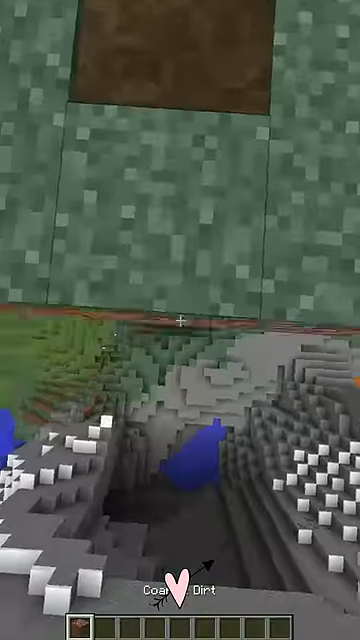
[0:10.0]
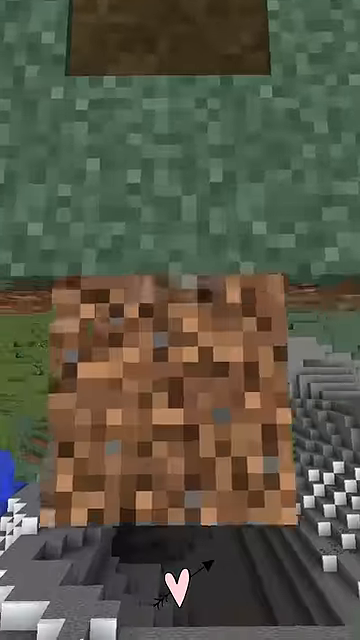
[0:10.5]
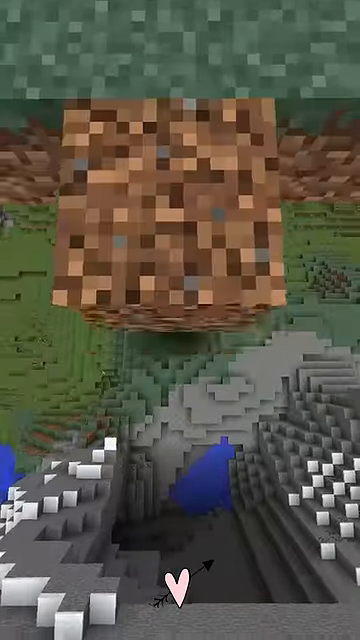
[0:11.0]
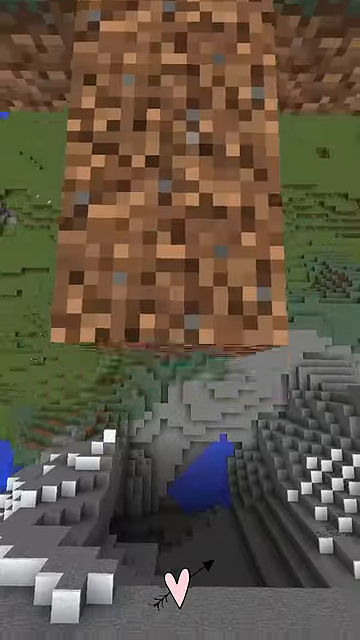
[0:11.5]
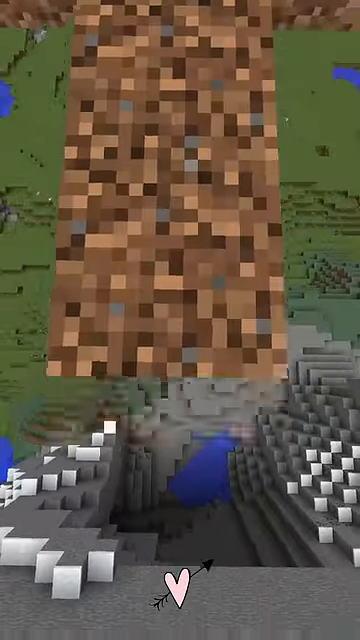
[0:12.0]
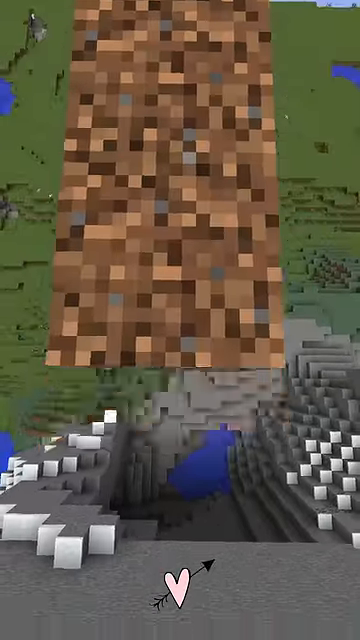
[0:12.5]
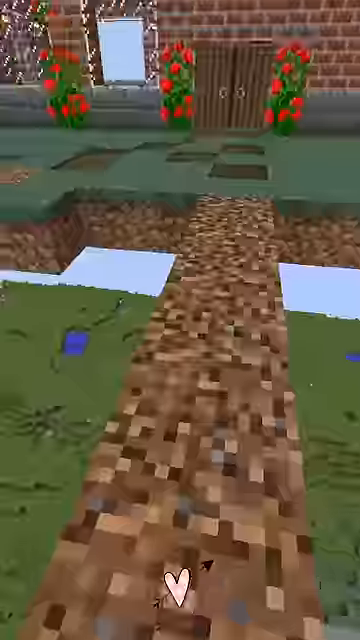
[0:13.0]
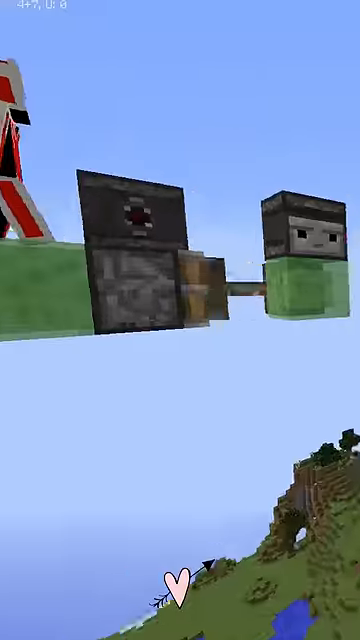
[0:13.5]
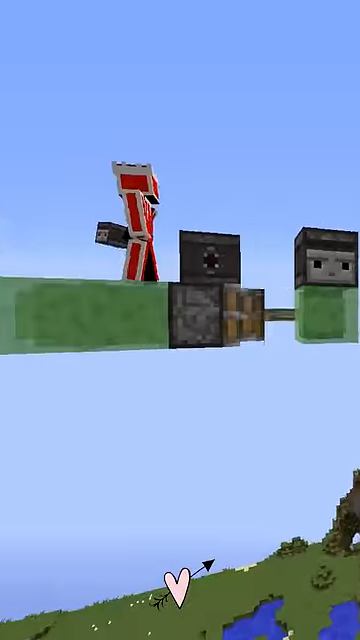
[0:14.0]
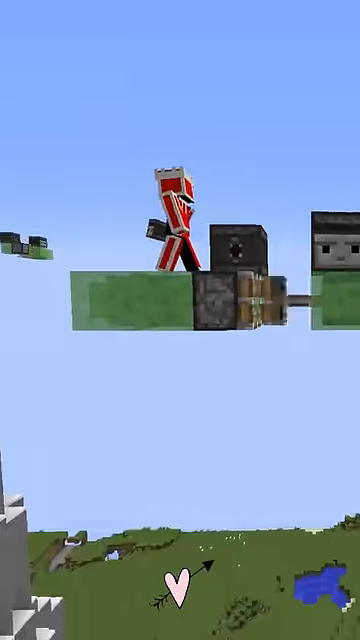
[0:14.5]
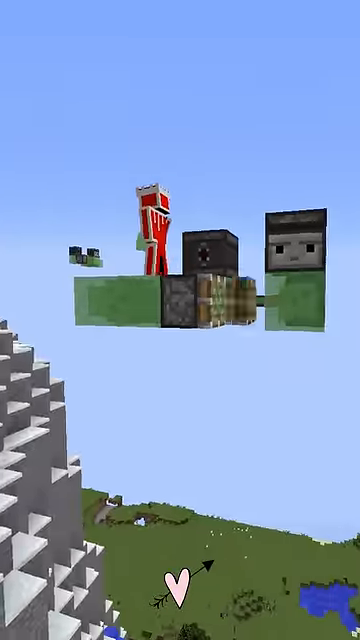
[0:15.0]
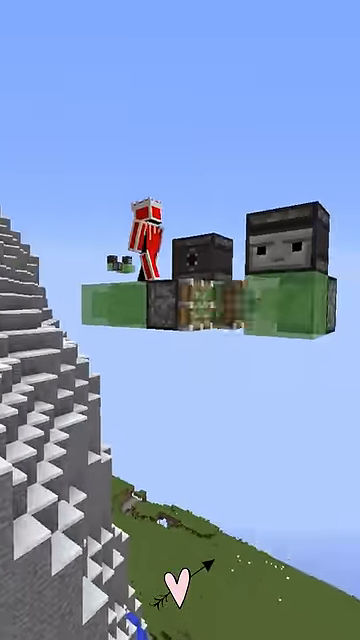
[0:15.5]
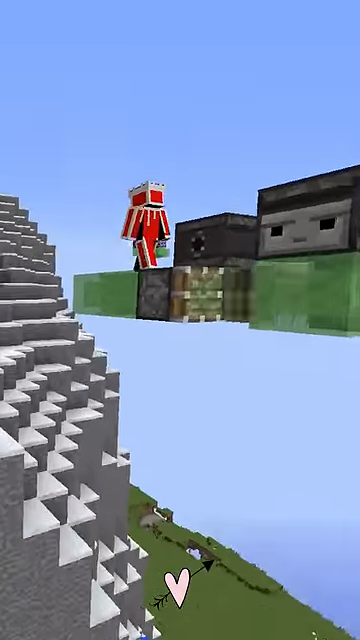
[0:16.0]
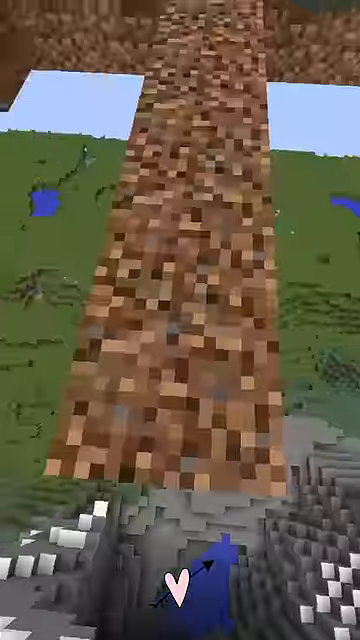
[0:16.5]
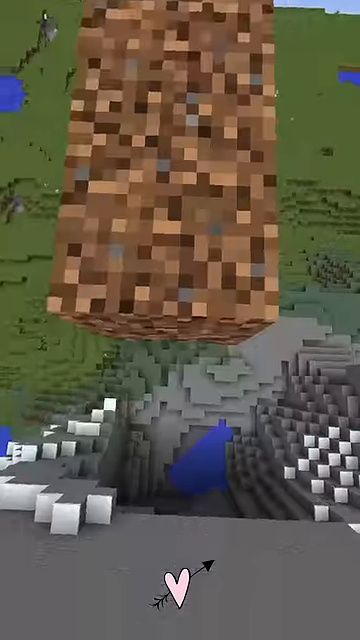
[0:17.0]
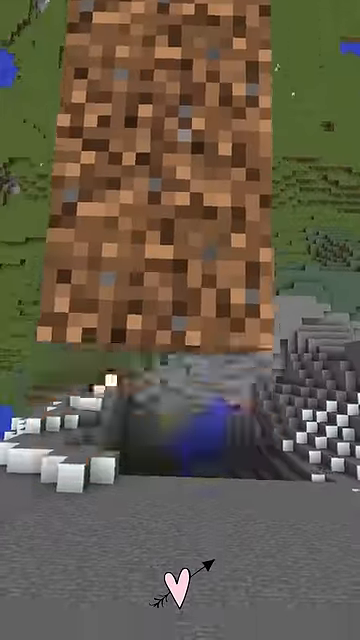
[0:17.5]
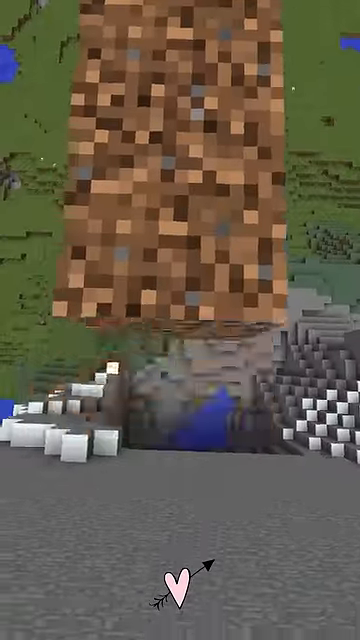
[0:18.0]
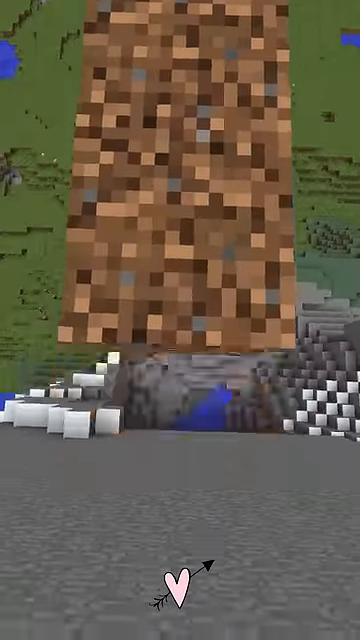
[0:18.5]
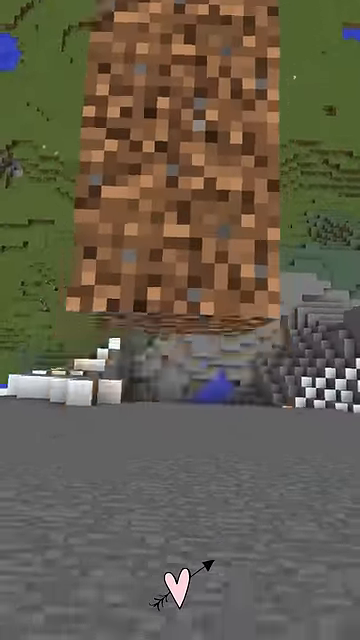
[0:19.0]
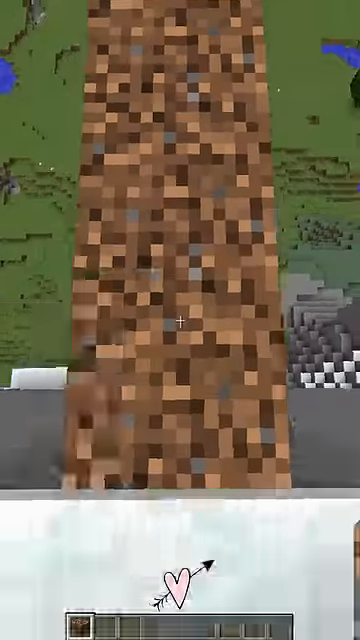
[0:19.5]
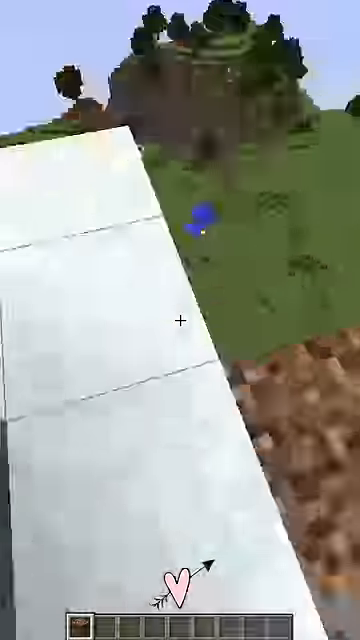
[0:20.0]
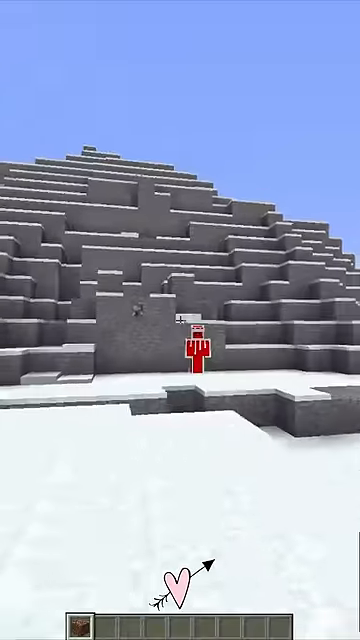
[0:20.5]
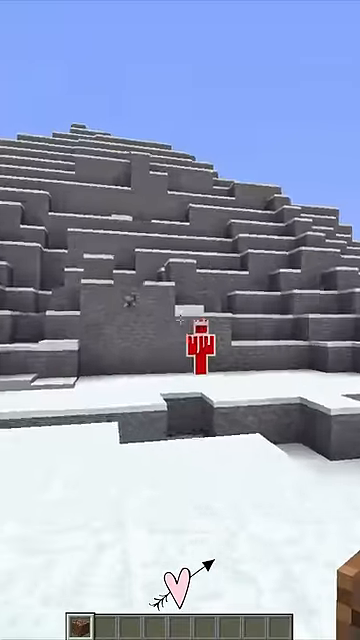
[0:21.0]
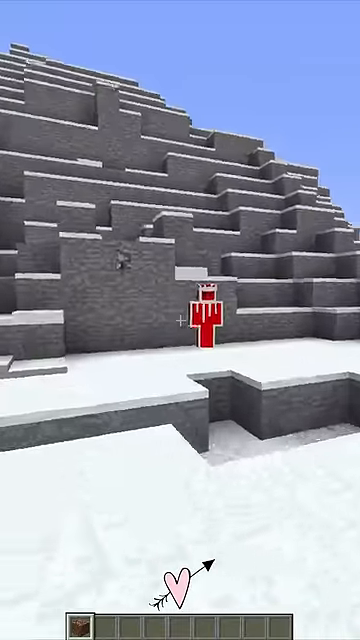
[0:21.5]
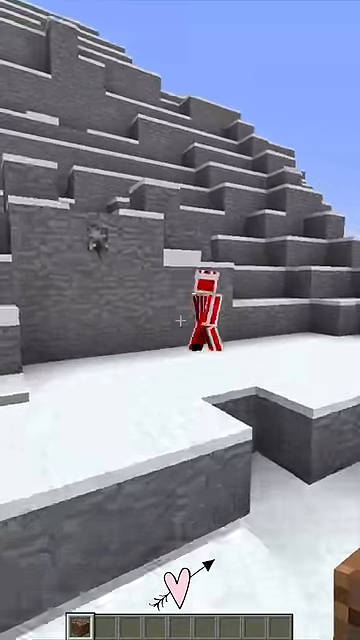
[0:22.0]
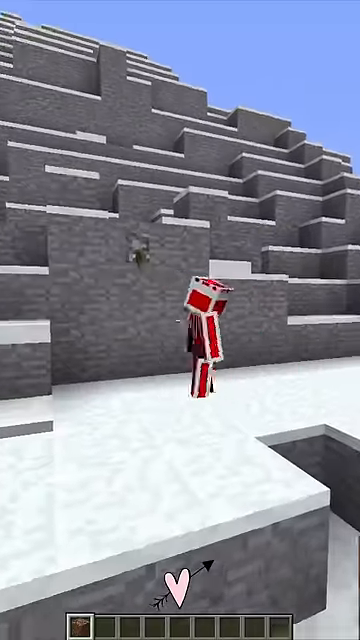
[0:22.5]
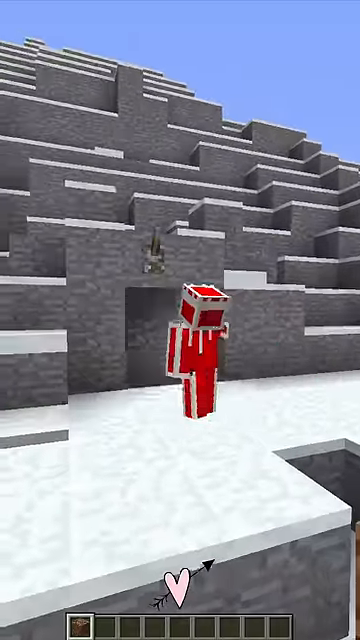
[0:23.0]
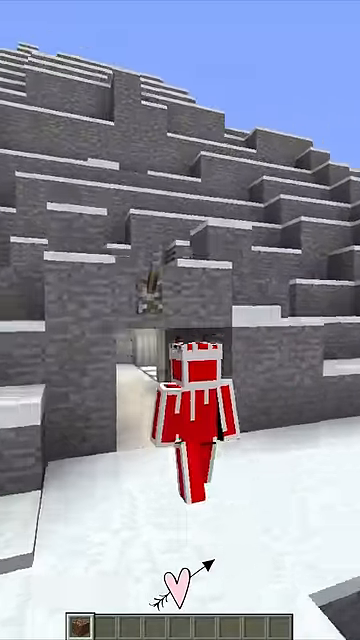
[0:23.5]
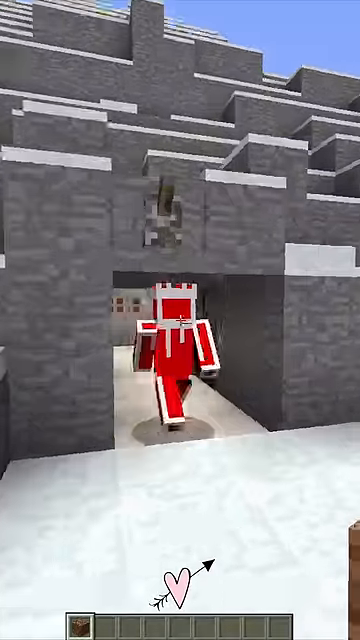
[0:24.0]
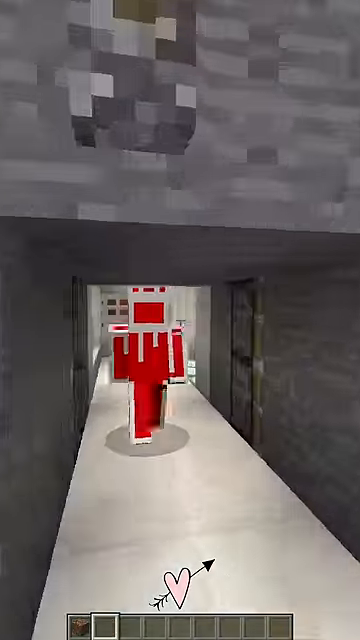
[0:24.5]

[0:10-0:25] The player's character faces forward toward the pile of gray blocks across a gap in the grass and dirt below, while the second red stick figure stands to the right. The player takes two steps forward and peers over the edge: below are brown squares of dirt, green squares of grass, and far below white and blue squares made to look like water. Looking down, squares of brown dirt are placed to form a bridge between the two sides so the character can walk forward. The character seems to take a step back, and the structure across the way is shown to be free floating. The view then looks up to the left, where the second red stick figure is up on a separate floating landmass. The two characters make their way over to the other side, where all the bricks are gray. As they approach, a door opens and the red stick figure begins walking into the interior of the structure.